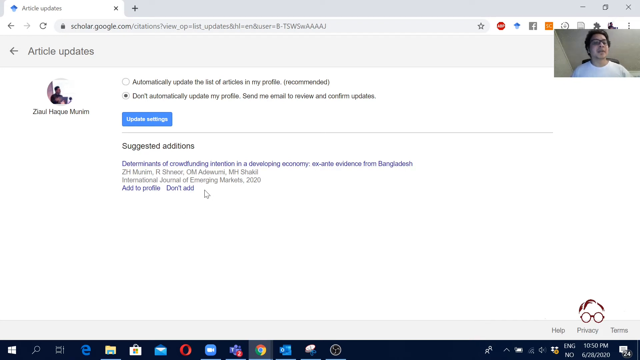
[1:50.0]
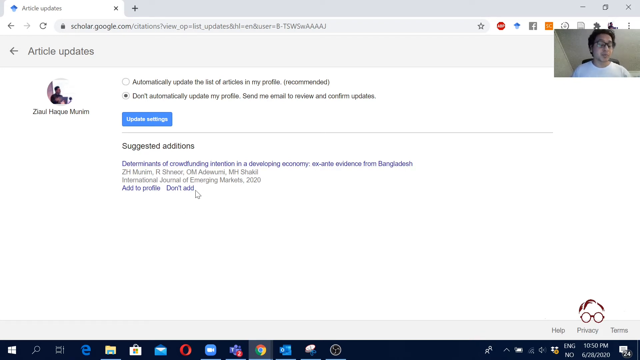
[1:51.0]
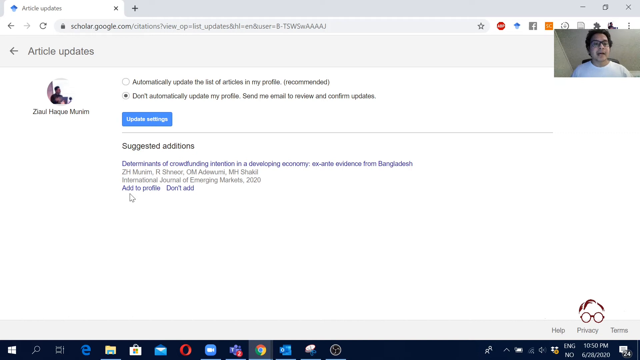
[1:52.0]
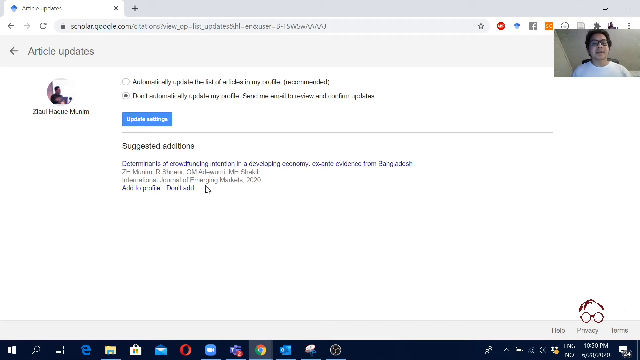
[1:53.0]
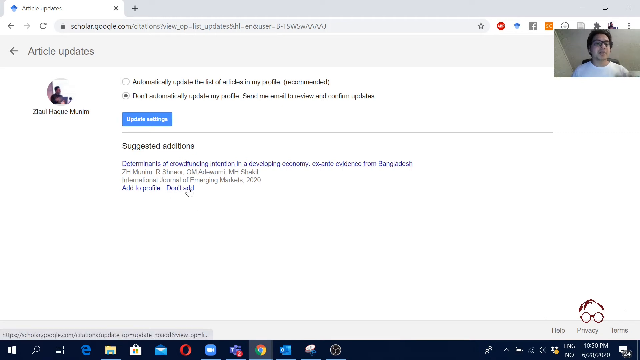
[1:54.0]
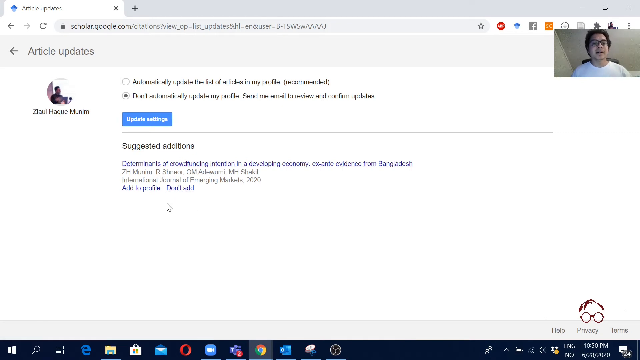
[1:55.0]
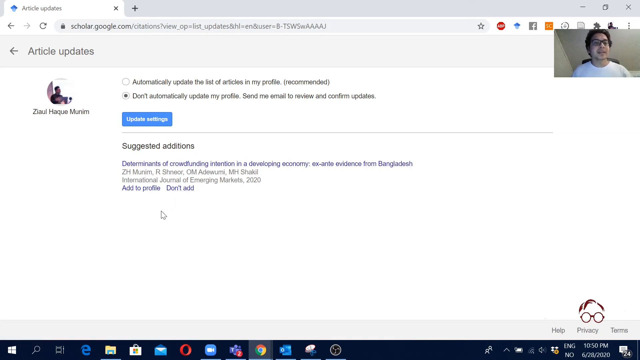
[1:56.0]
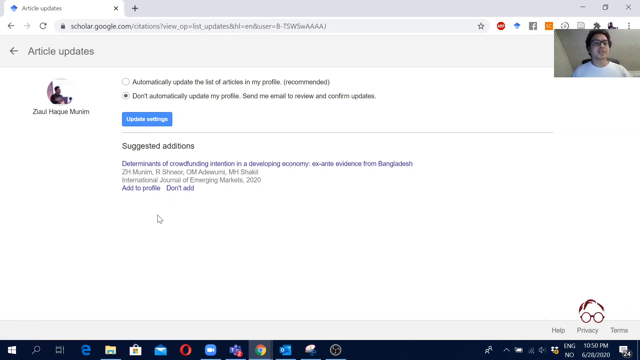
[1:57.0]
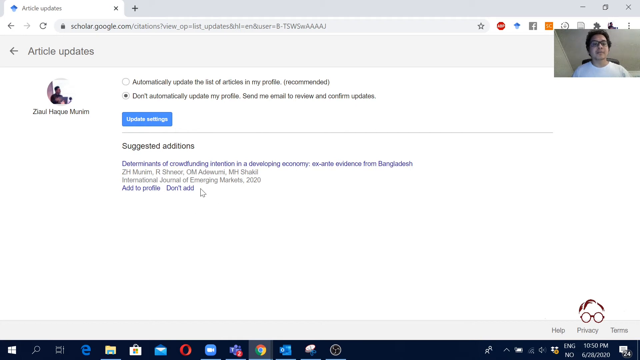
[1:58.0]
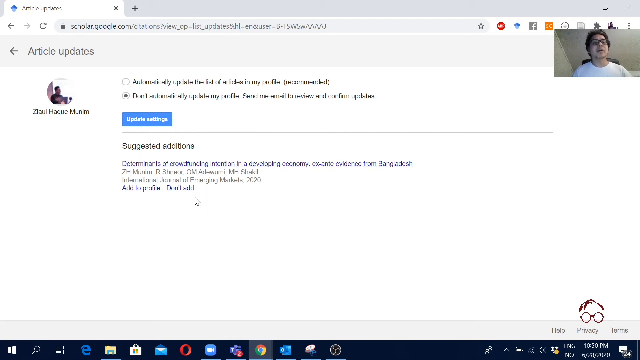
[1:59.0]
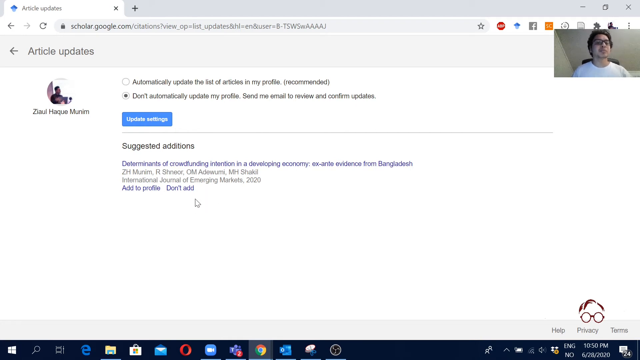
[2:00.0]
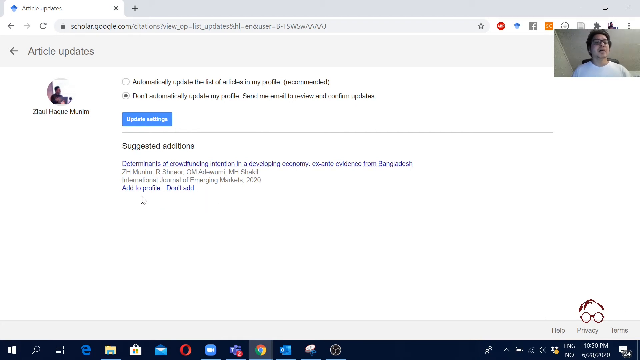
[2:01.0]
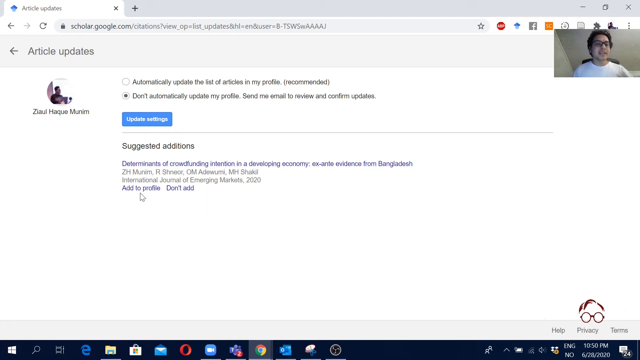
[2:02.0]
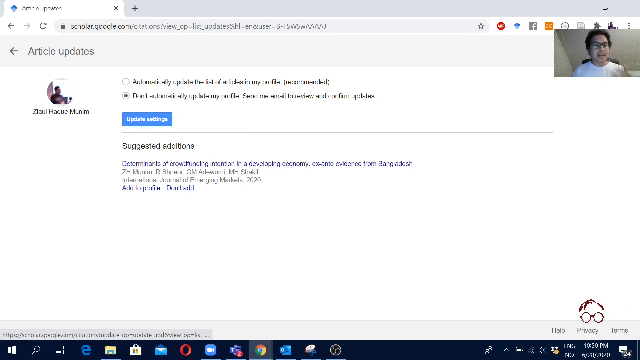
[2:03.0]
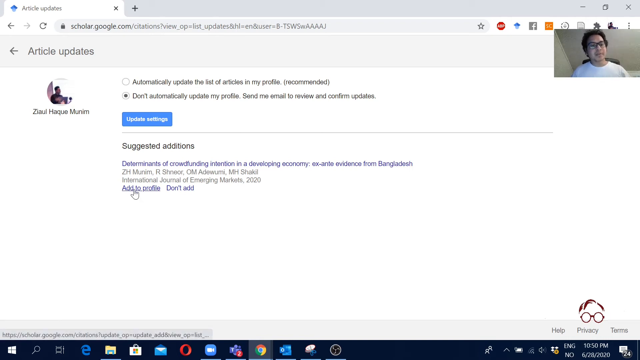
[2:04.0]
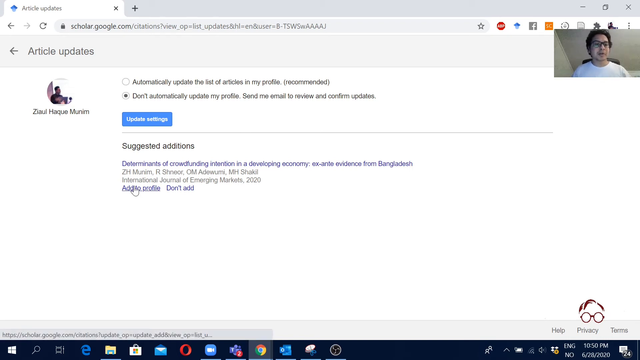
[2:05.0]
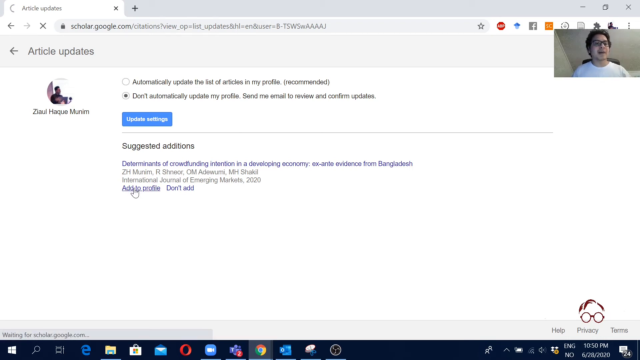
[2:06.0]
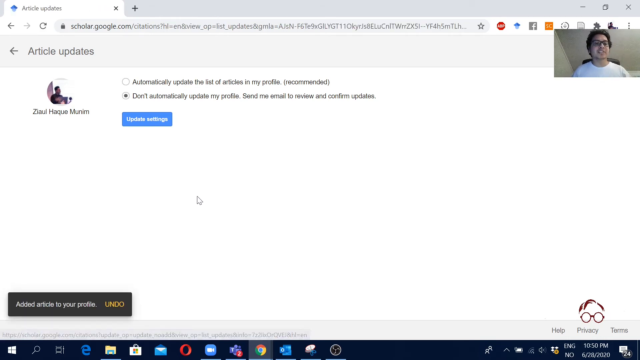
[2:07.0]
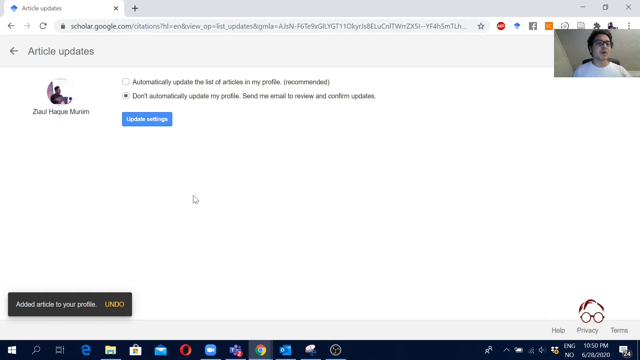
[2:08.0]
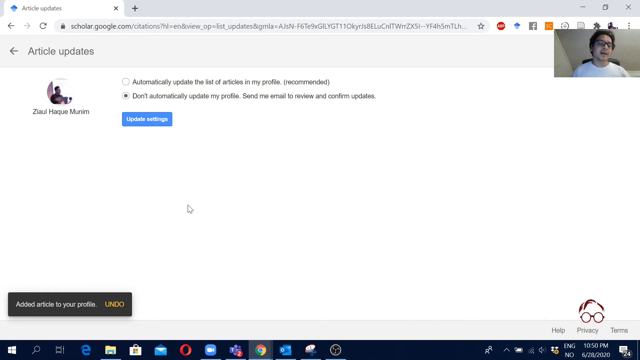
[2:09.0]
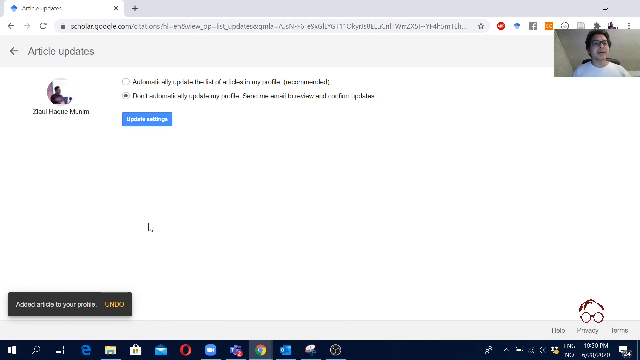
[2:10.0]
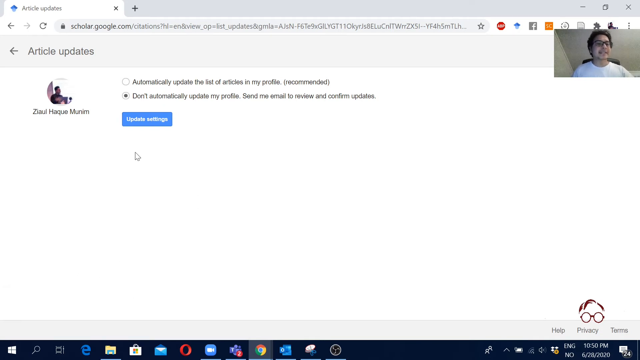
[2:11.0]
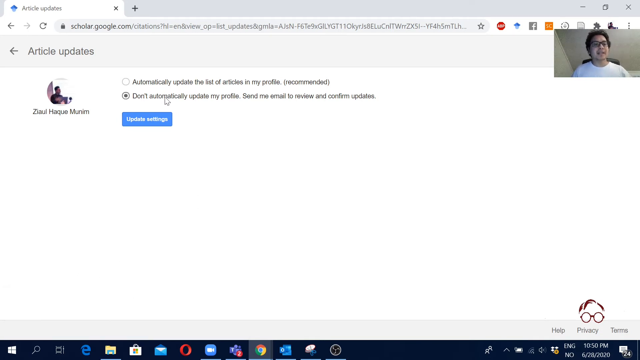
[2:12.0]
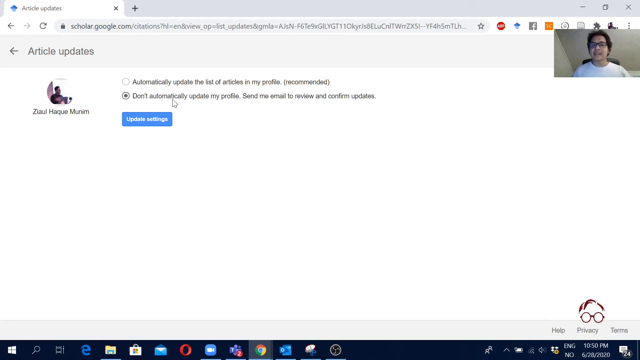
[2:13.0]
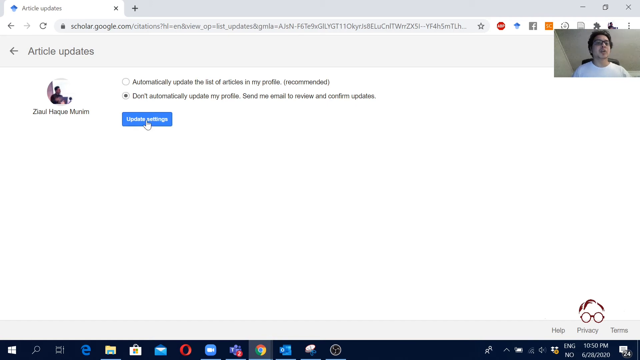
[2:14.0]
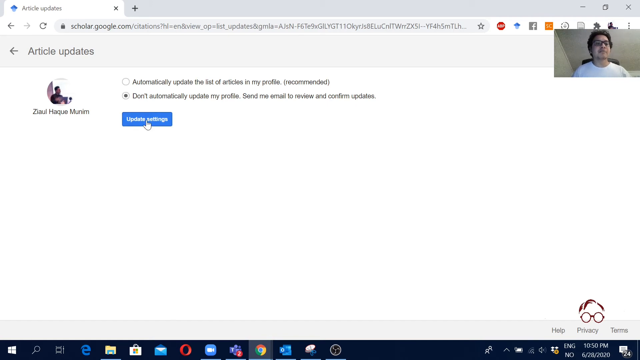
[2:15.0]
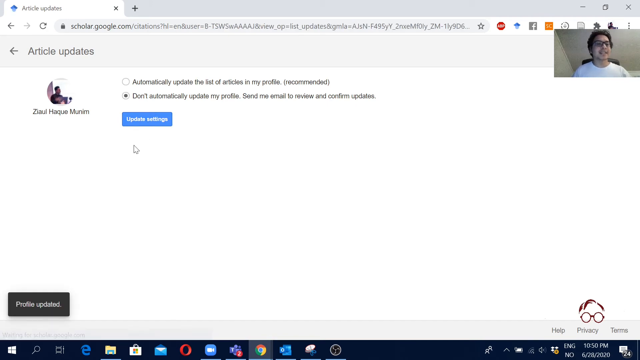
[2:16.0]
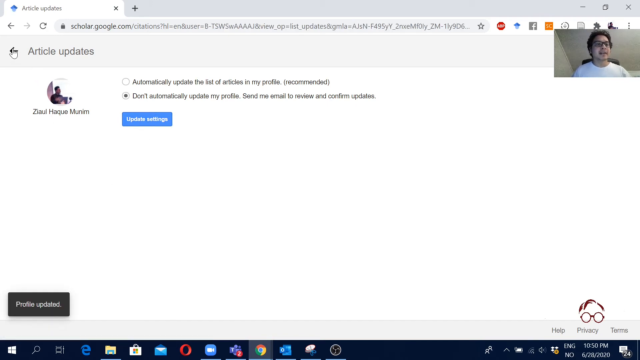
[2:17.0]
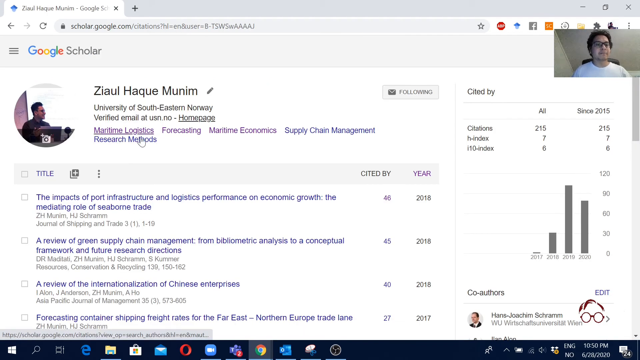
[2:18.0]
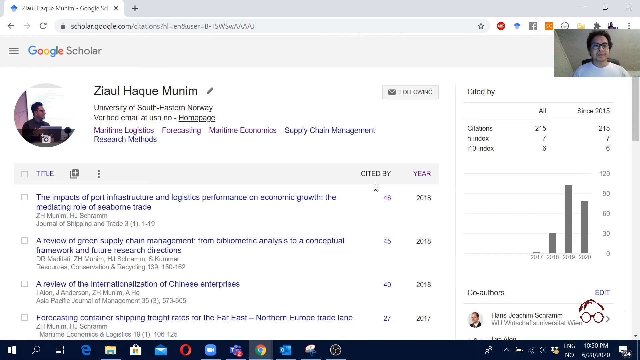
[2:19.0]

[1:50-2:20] A man does a tutorial on his computer, with his picture in the upper right-hand corner, talking while working on the computer. He is on a page that says "article updates" and points out the words "don't add", spinning his cursor in that area. There is also "add to profile", which he clicks. Then "update settings" appears and he clicks it, then clicks the back button. The "cited by" section has changed somewhat.